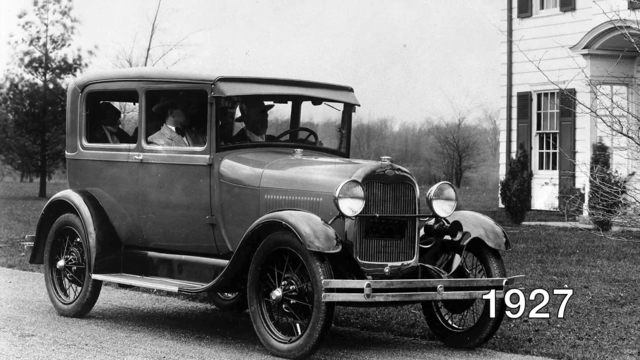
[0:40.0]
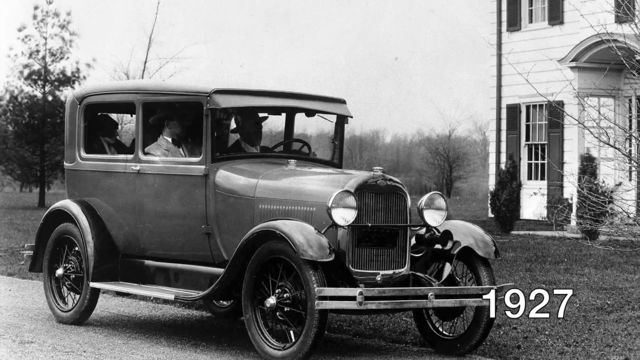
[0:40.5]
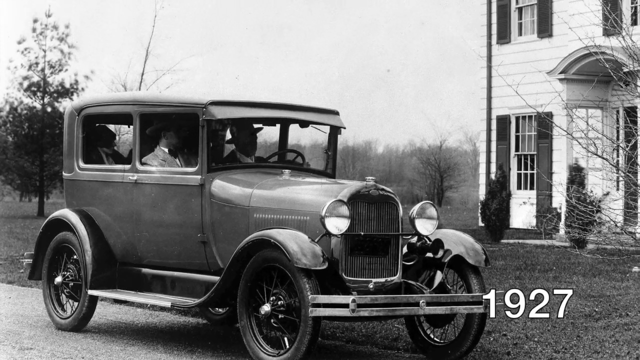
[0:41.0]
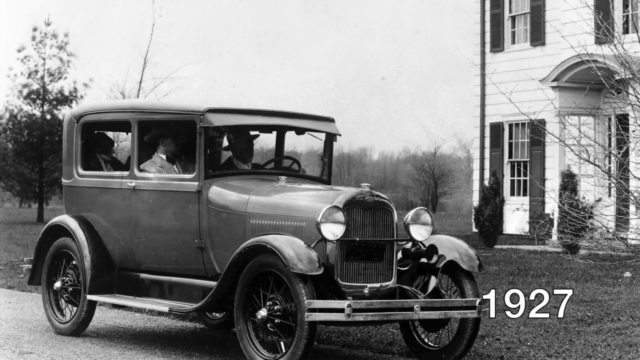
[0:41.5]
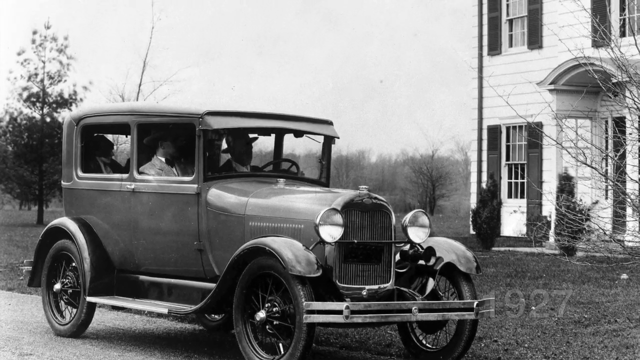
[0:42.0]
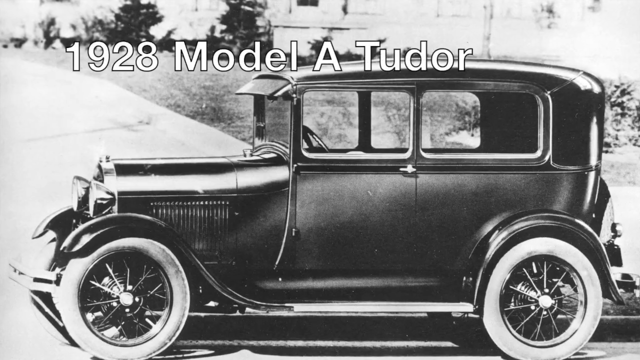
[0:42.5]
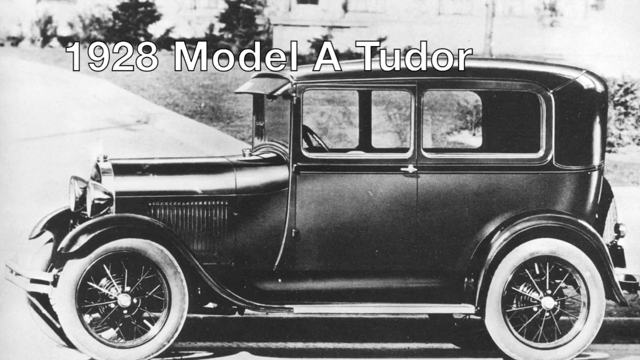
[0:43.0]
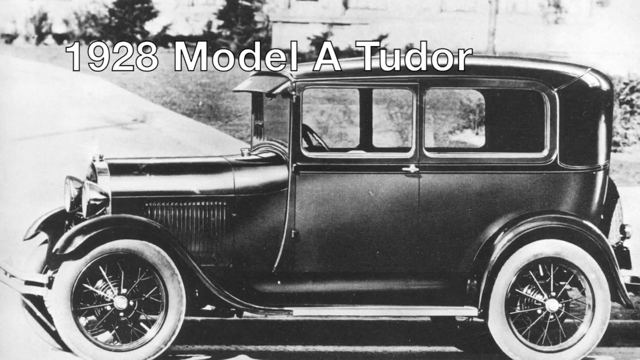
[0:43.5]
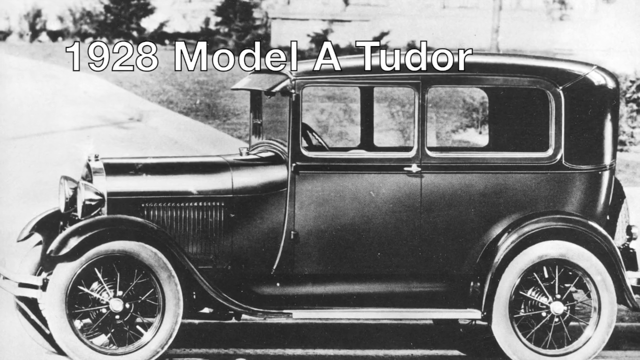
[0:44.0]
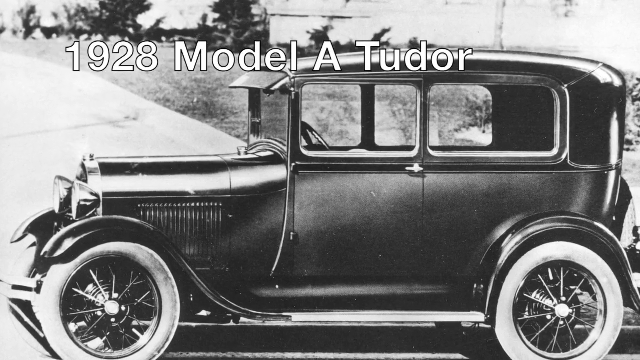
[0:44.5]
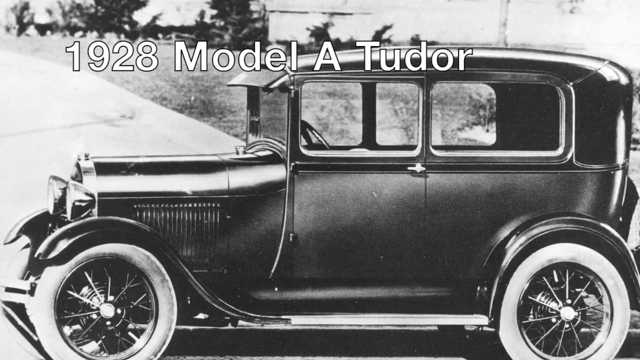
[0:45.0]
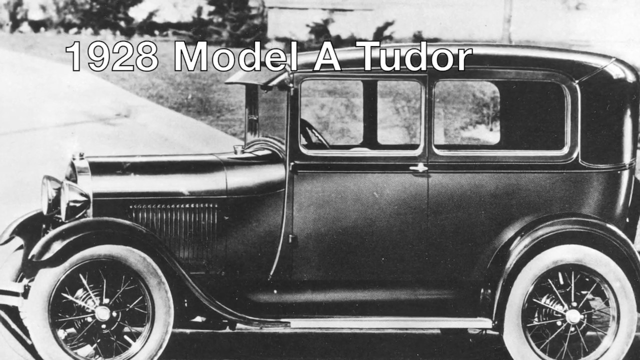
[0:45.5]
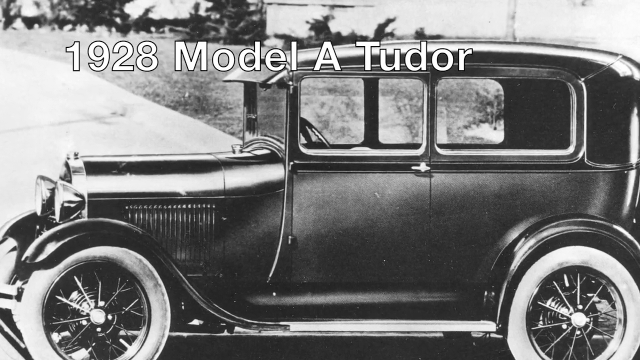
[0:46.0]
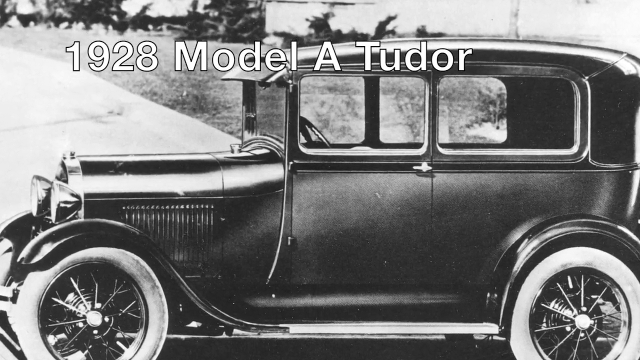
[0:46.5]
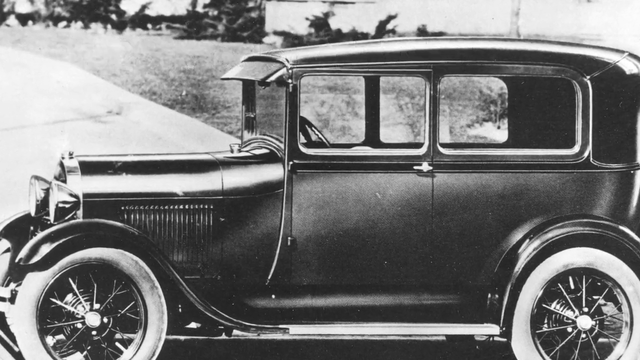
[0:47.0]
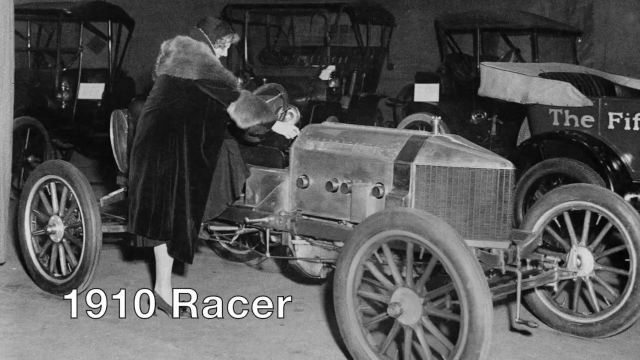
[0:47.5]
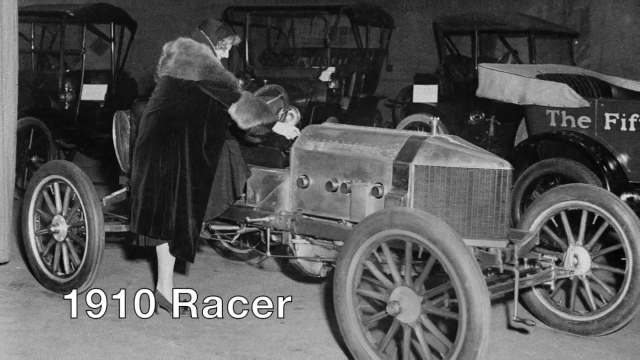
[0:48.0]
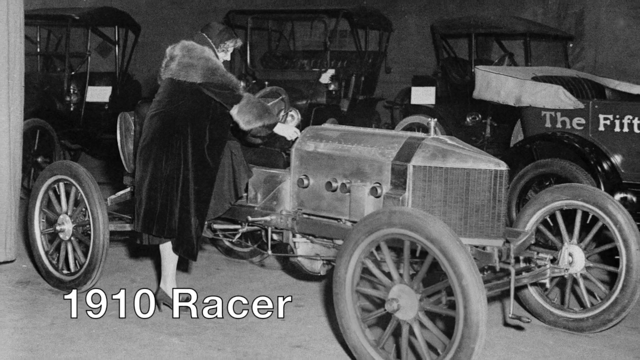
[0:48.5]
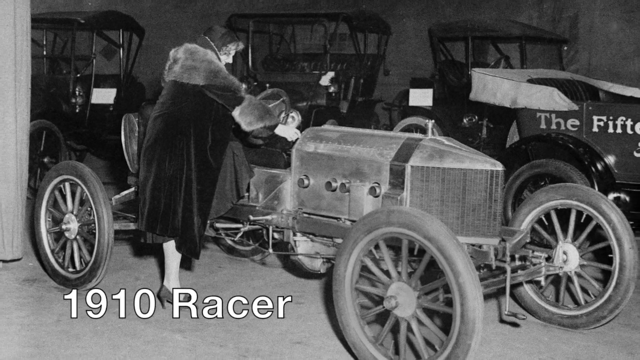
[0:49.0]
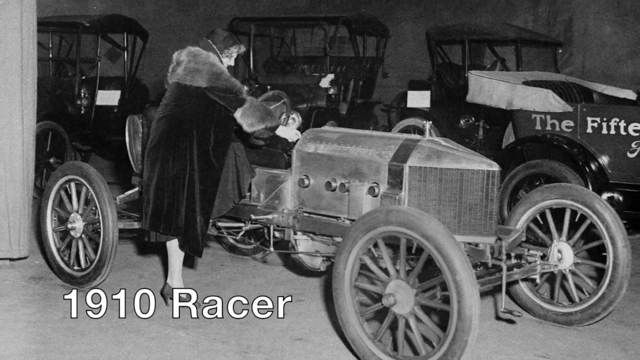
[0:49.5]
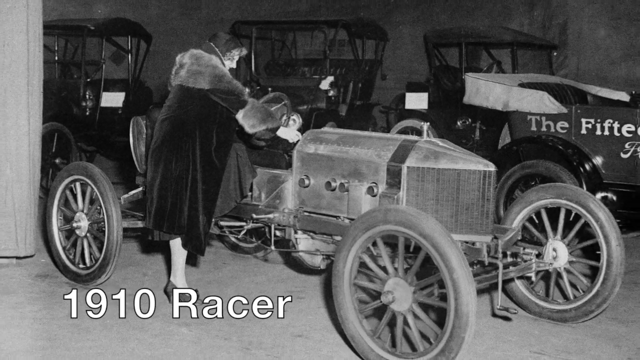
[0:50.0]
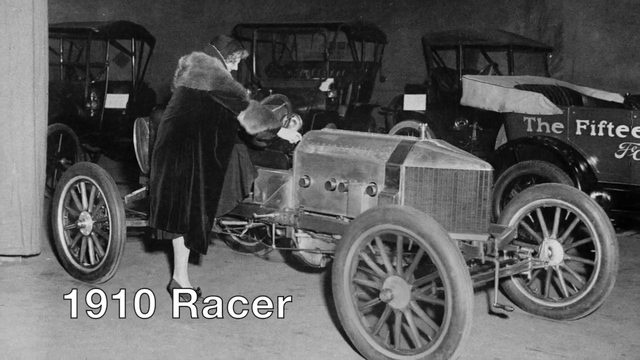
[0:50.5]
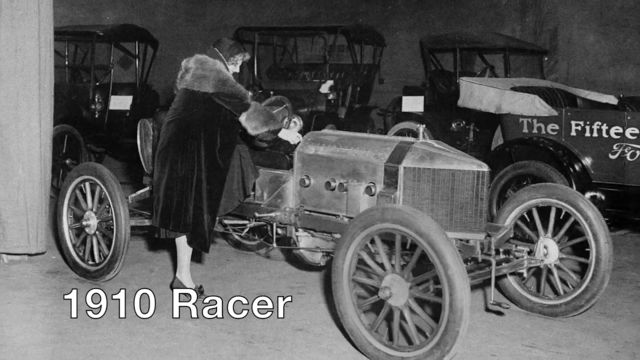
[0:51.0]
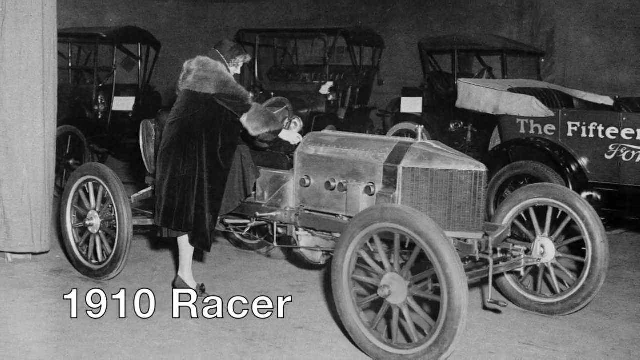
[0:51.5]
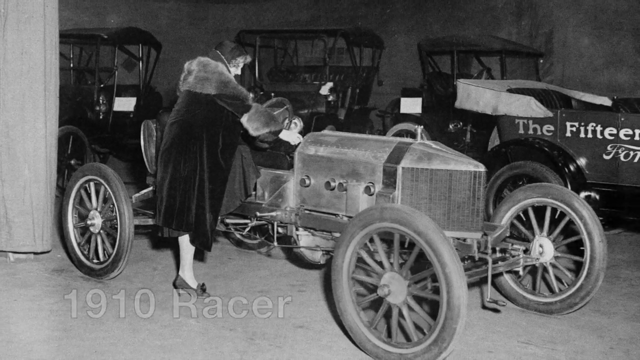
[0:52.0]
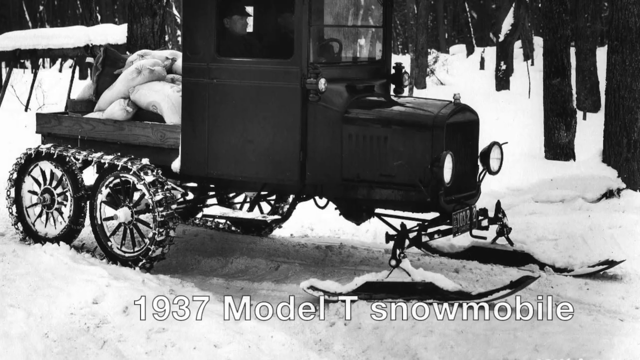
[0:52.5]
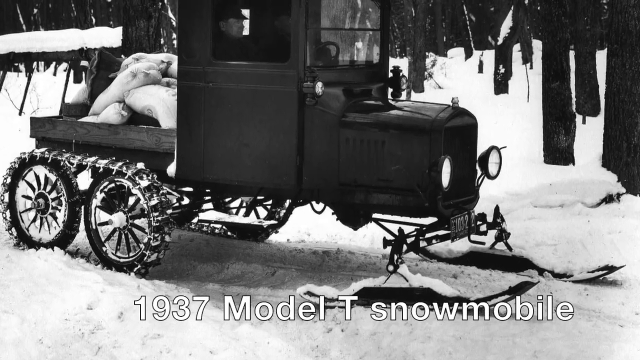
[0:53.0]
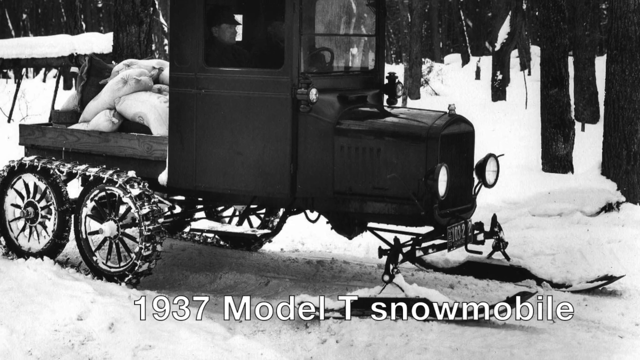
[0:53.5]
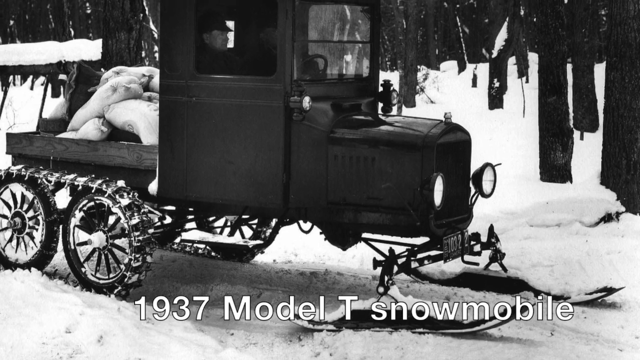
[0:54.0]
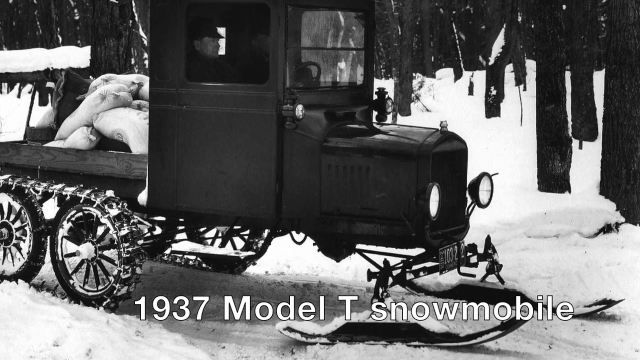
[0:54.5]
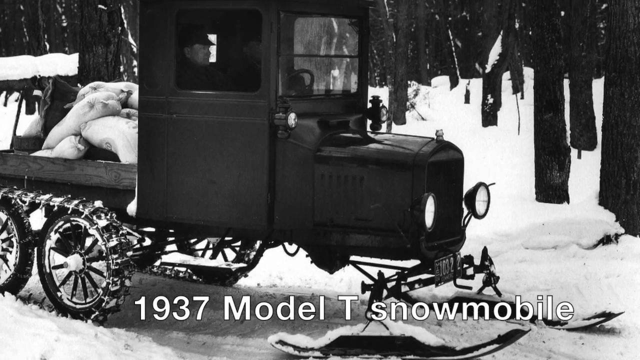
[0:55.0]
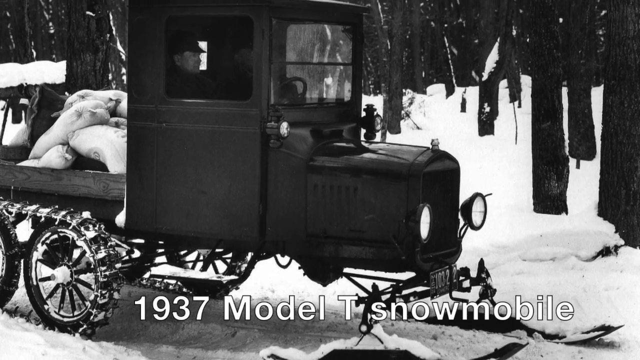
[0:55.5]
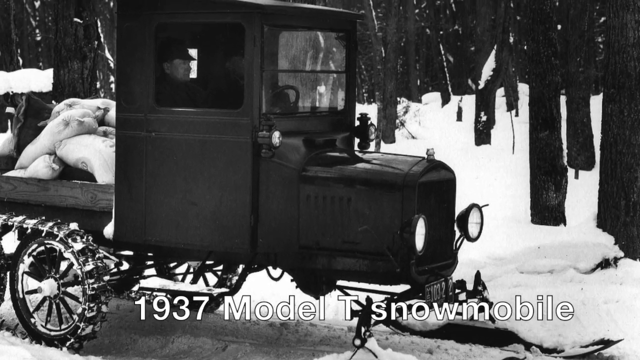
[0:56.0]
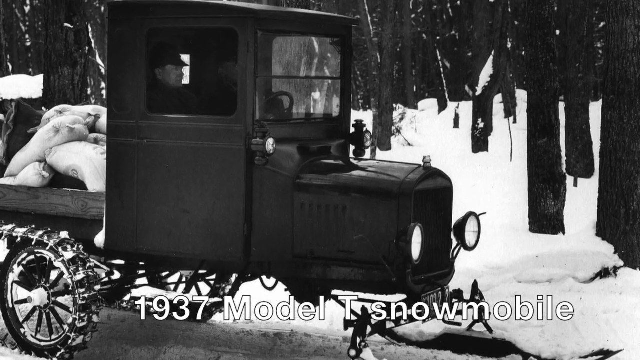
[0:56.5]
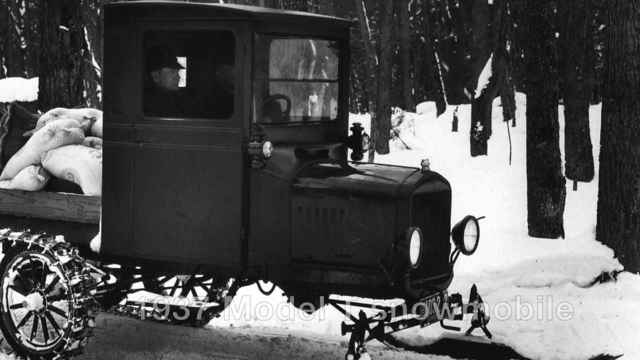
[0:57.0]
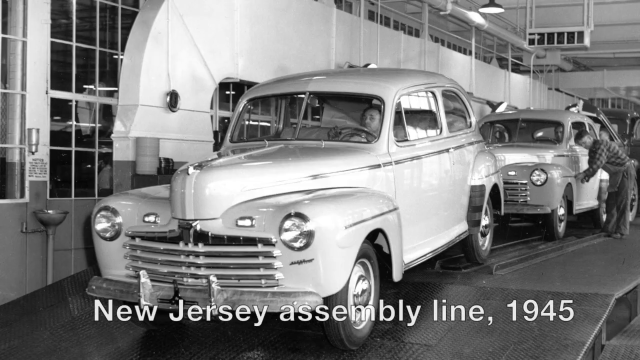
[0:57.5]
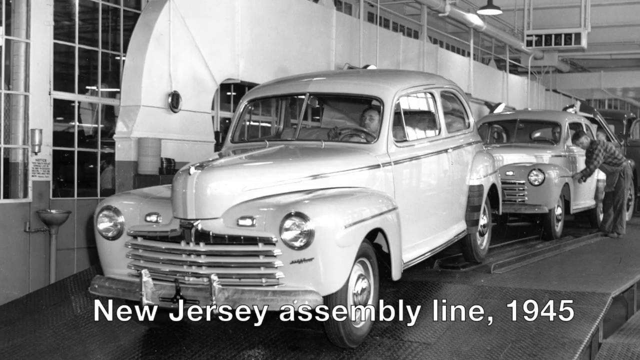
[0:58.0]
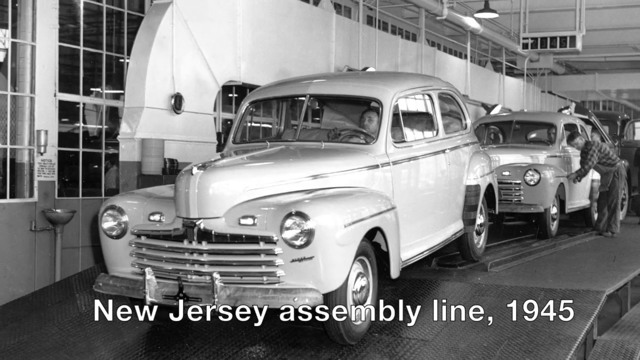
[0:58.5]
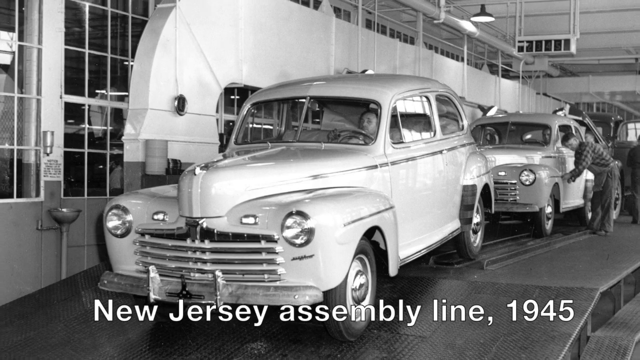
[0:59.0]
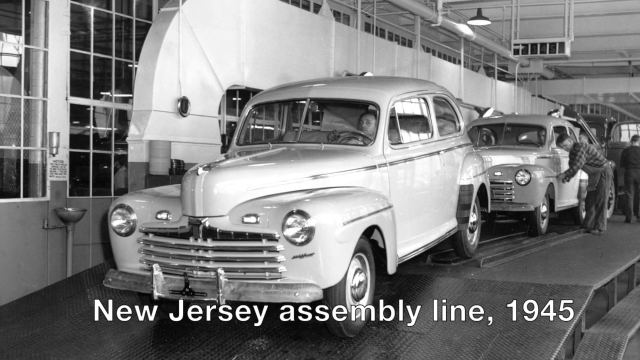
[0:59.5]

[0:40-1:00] The sequence begins with the 1927 model and proceeds to the 1928 Model A Tudor, a 1910 Racer, and a 1937 Model T snowmobile, then segues to the Ford assembly line in 1945. The 1928 Model A Tudor has large white rim tires. The 1910 Racer appears to be designed for racetracks rather than the road, with an aerodynamic design but limited comfort features. The snowmobile has tractor-type wheel configurations in the rear and a snow plow in the front. It appears to have seating in the front for two in a limited front cabin, and in the rear a truck bed with an open bed area.